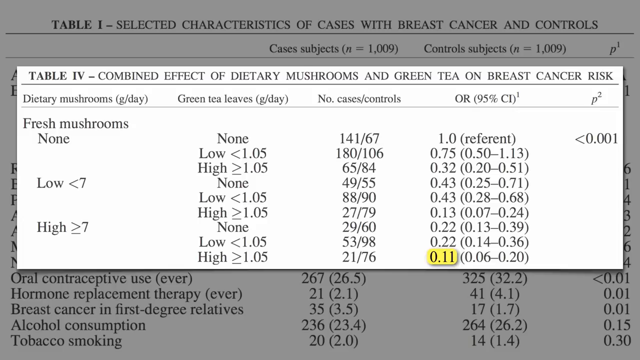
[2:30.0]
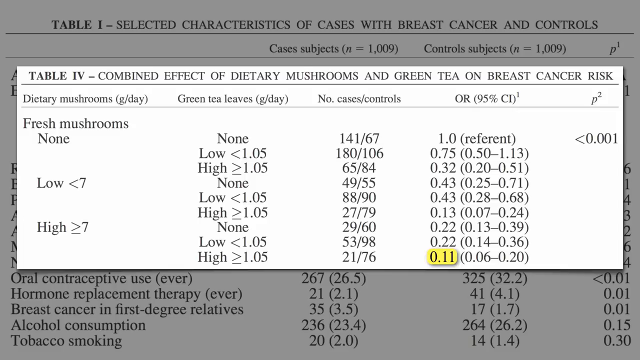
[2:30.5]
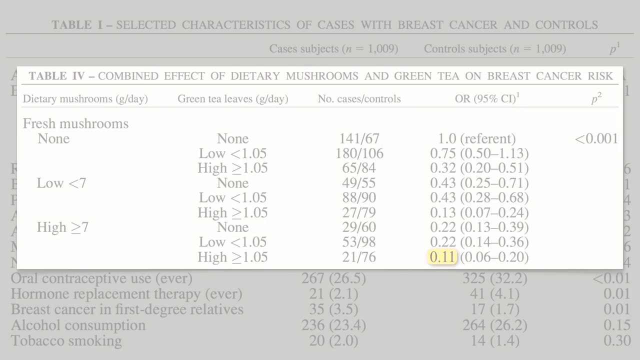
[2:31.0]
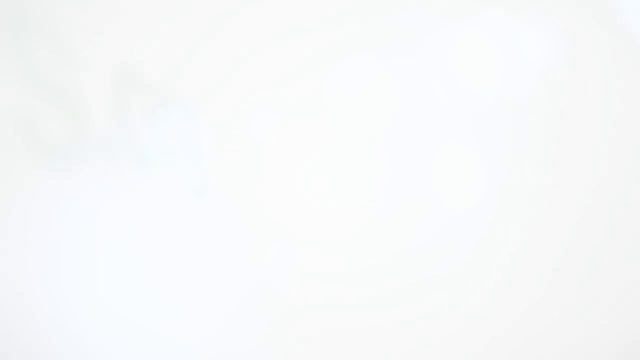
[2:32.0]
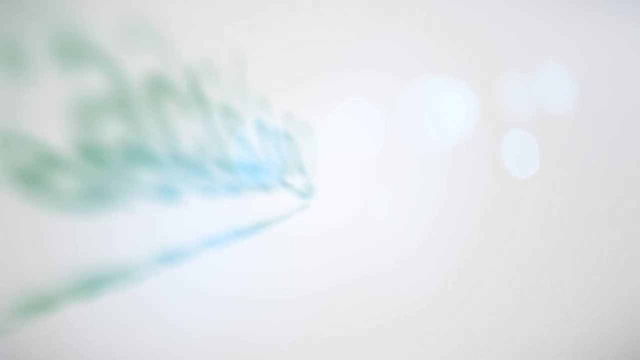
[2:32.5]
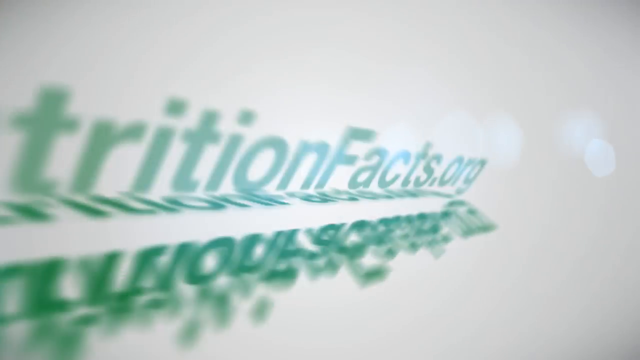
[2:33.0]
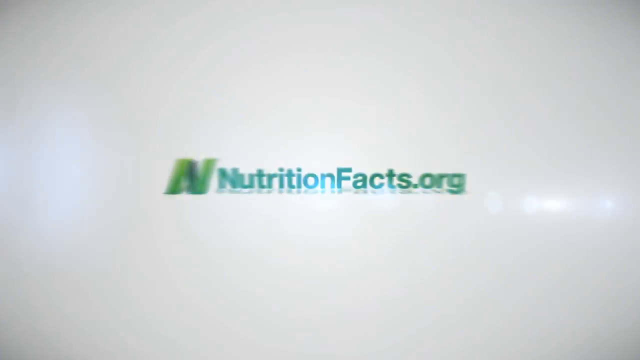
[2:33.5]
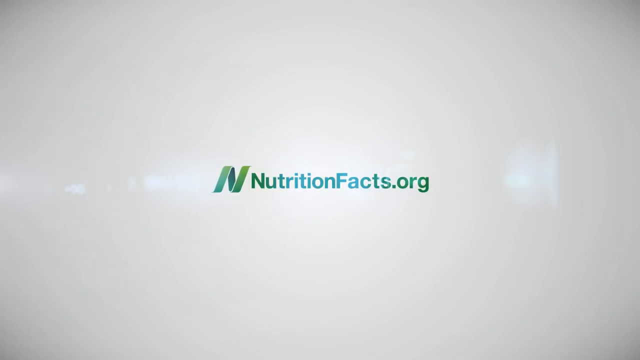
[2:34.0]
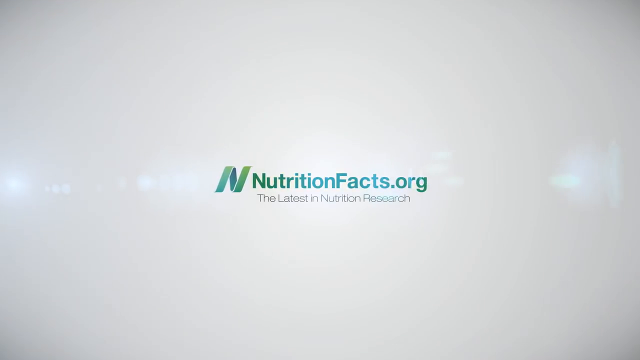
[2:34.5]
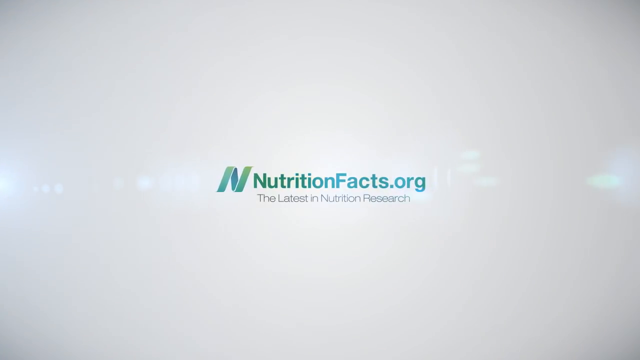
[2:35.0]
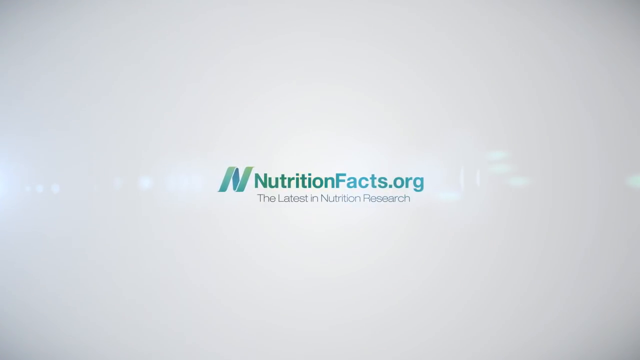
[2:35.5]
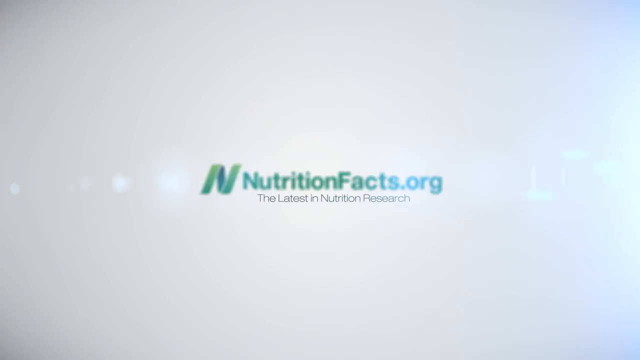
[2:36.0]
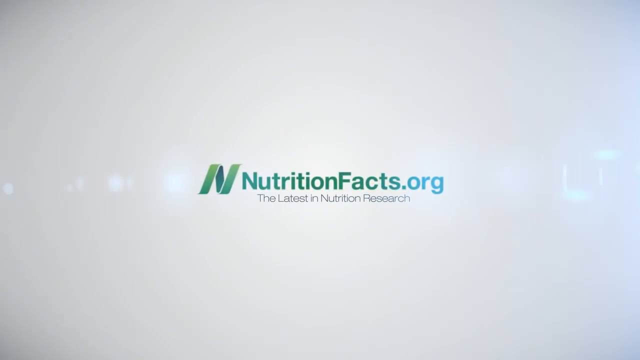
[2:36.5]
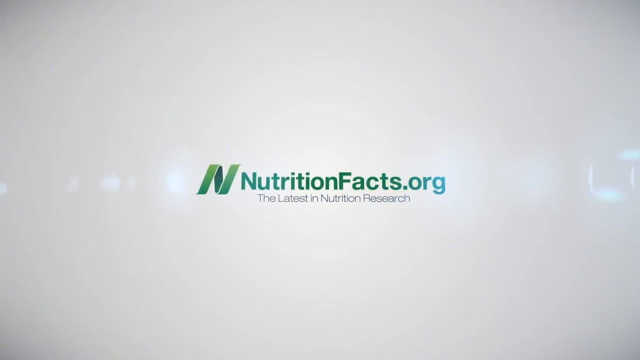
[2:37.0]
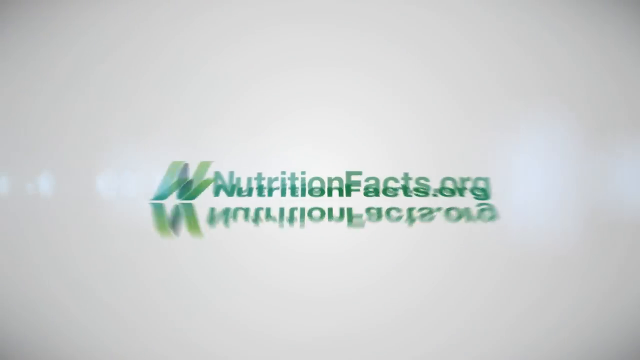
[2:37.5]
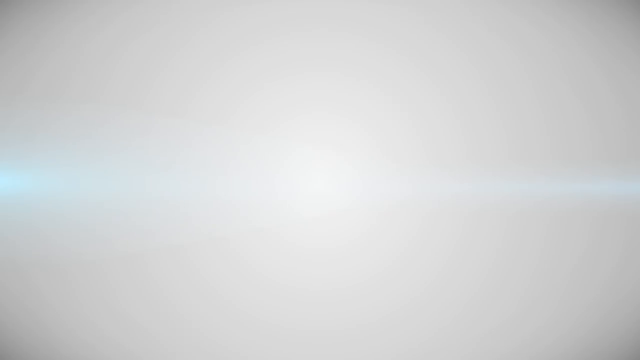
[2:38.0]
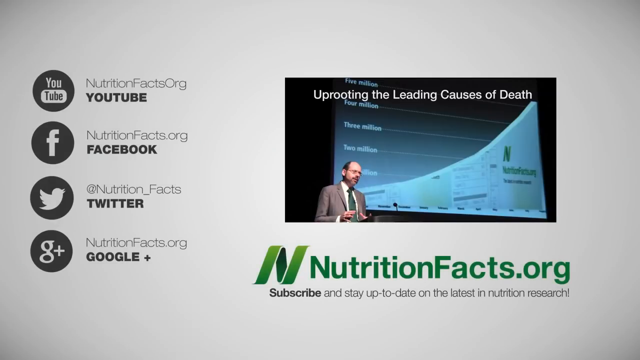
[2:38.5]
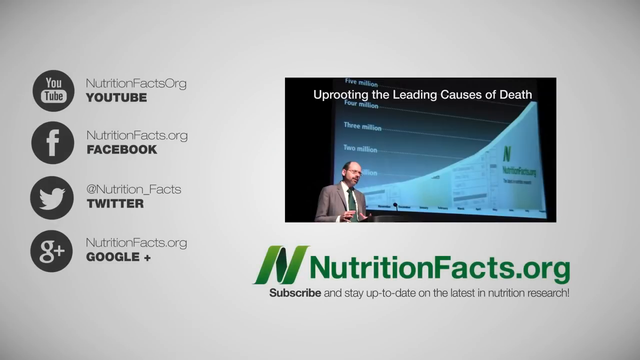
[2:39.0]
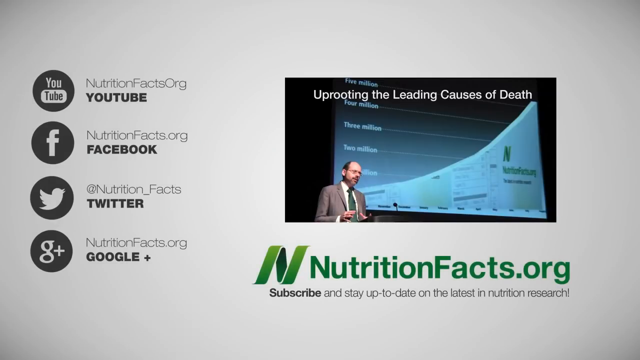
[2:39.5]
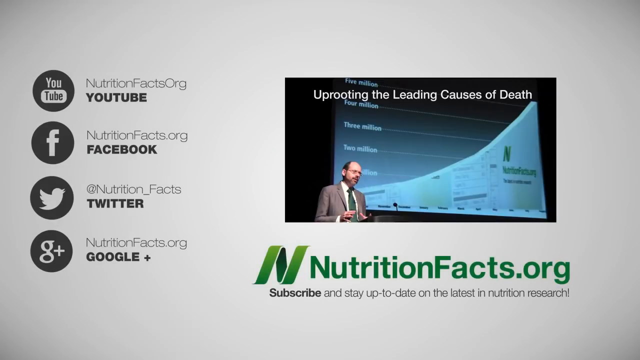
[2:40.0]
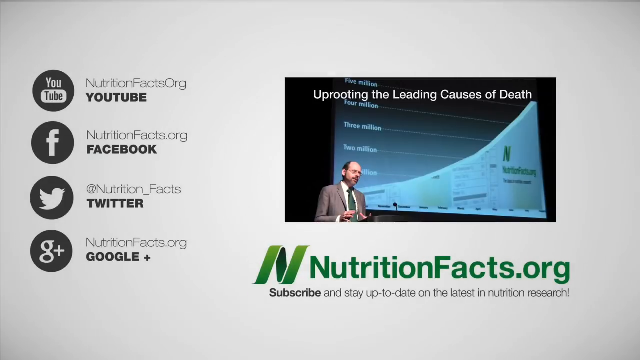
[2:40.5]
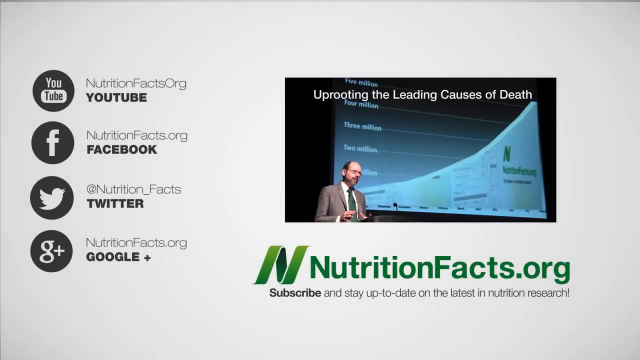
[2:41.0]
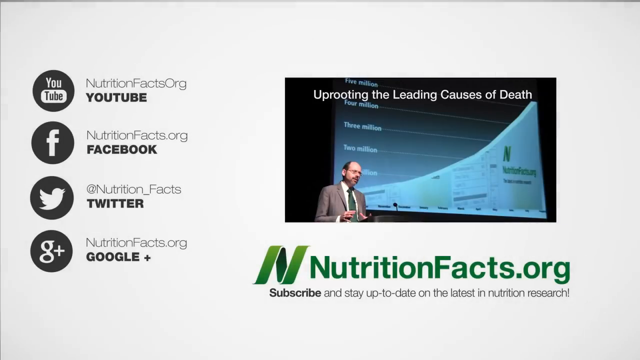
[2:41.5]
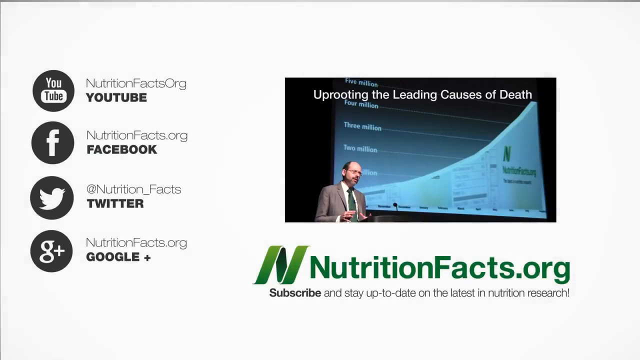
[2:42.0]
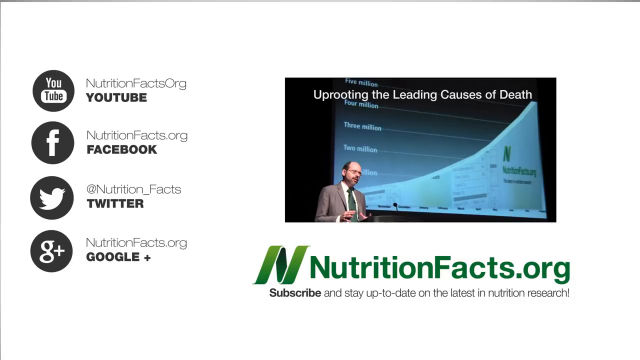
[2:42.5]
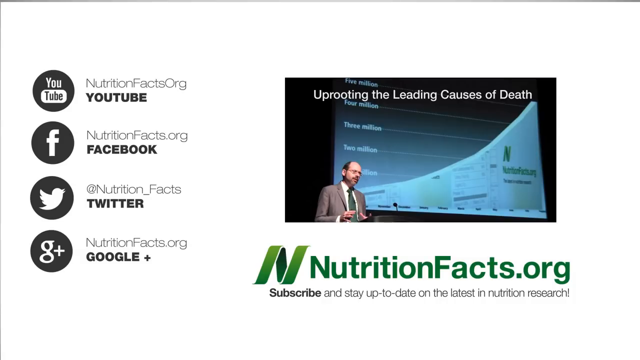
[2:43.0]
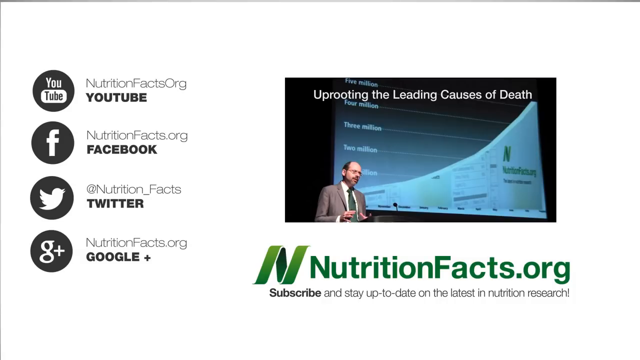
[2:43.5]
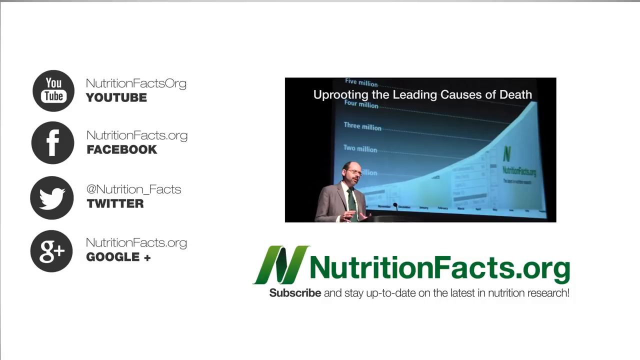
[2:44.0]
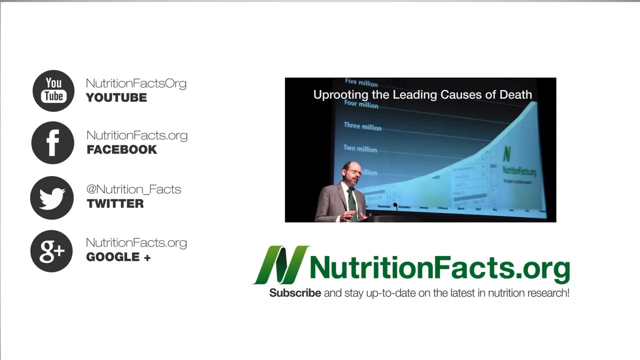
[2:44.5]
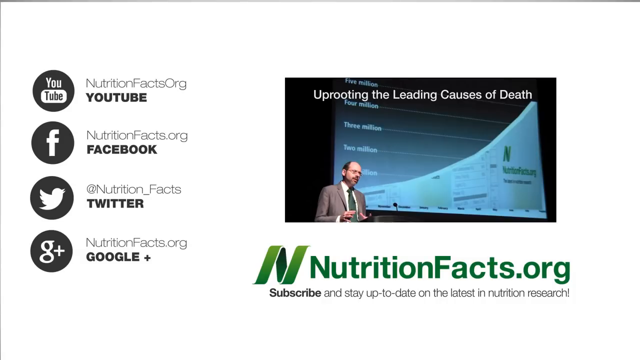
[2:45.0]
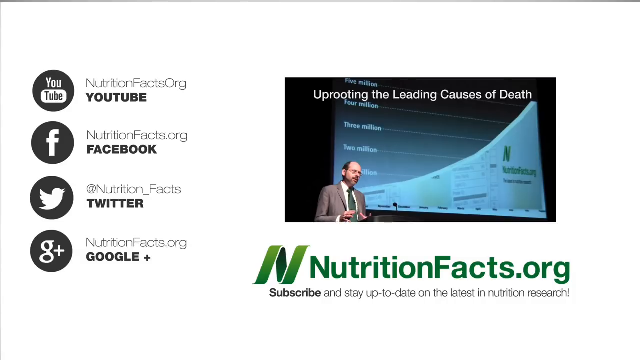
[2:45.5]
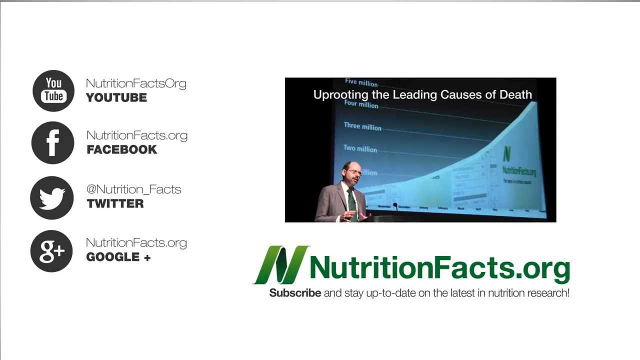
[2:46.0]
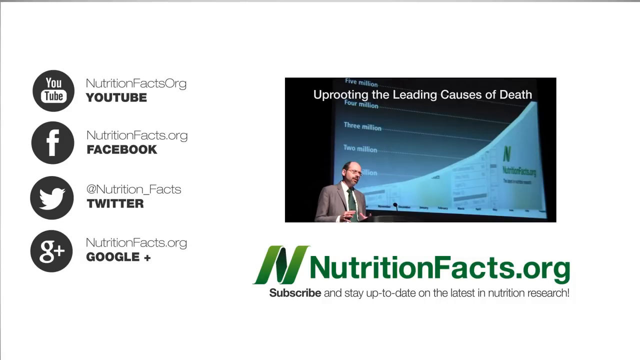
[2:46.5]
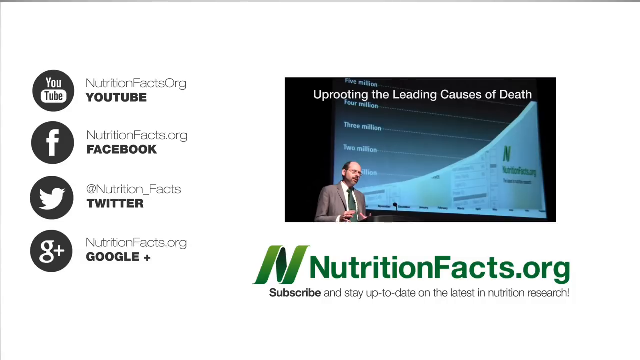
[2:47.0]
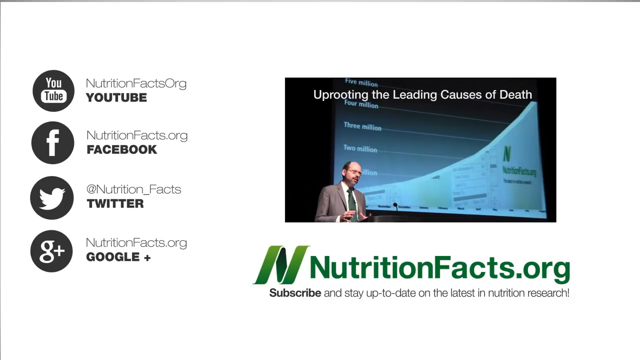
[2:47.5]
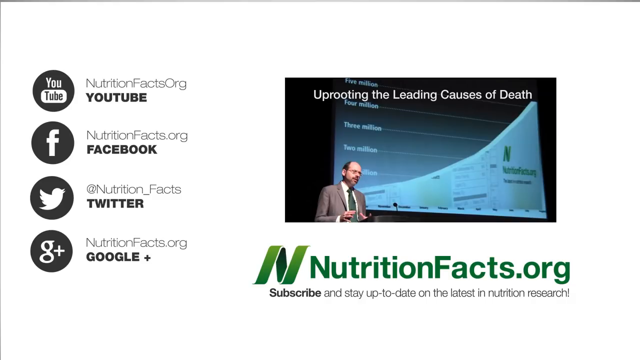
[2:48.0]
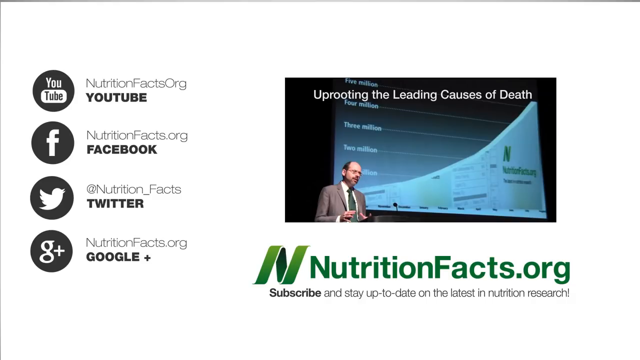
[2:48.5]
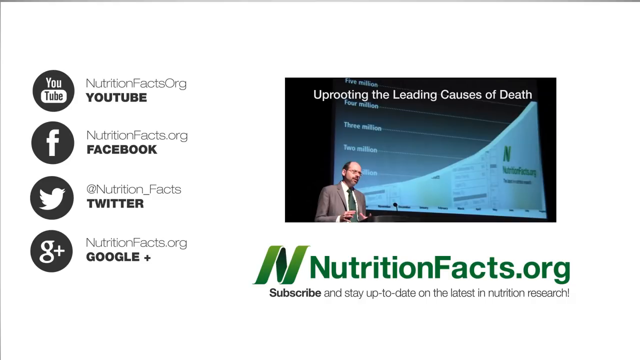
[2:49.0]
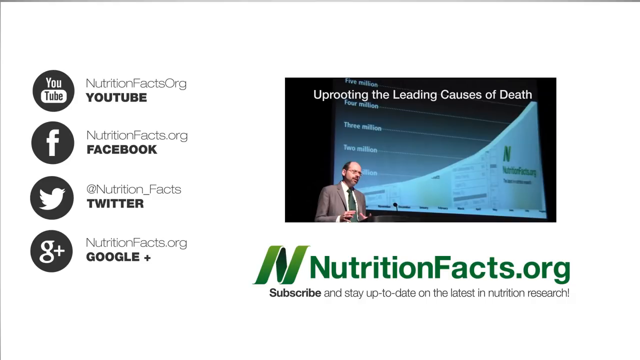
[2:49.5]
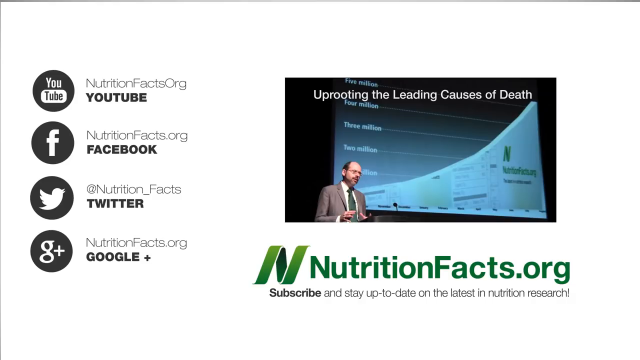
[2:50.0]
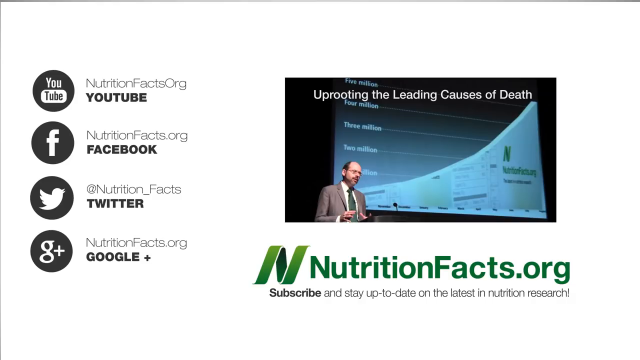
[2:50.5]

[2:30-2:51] The white background shows the black text of Table 1, partially overlapped in the middle of the screen by a brighter white rectangular box with black text that says "table 4, combined effect of dietary mushrooms and green tea on breast cancer risk", with columns for dietary mushrooms per day, green tea leaves per day, the number of cases/controls, and corresponding values in the right-hand column. The video transitions to a white screen, and the same intro logo comes in: green text that is partially blue in the middle moves in from the left-hand side and sweeps to the middle of the screen, showing a capital N and "nutritionfacts.org, the latest in nutrition research". This appears to be an outro screen. Towards the end, "nutritionfacts.org" slightly enlarges with a popping-out effect and vibrates slightly. The logo then rotates rapidly and moves towards the camera, transitioning to an end screen with the NutritionFacts.org logo in all green in the bottom right corner and black text underneath saying "subscribe and stay up to date on the latest in nutrition research". Above the logo is what looks to be a link to another YouTube video called "Uprooting the Leading Cause of Death", showing a man in a grey suit standing with a graph behind him, standing over a microphone. On the left-hand side of the screen are a YouTube logo, a Facebook logo, a Twitter logo and a Google Plus logo, all grey and white.